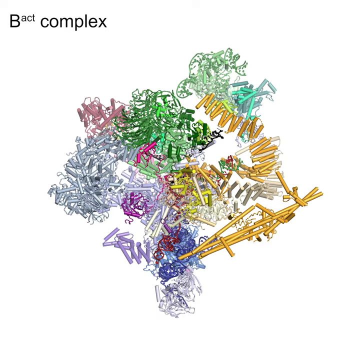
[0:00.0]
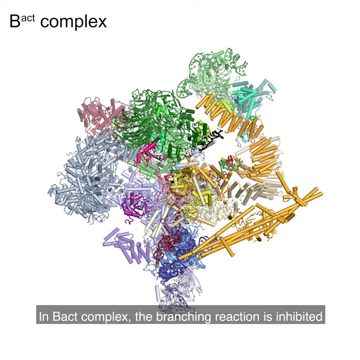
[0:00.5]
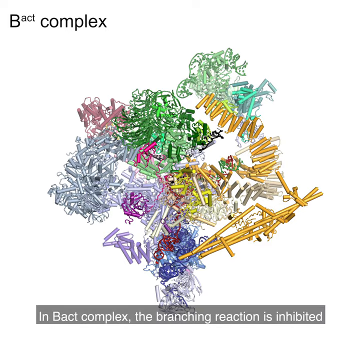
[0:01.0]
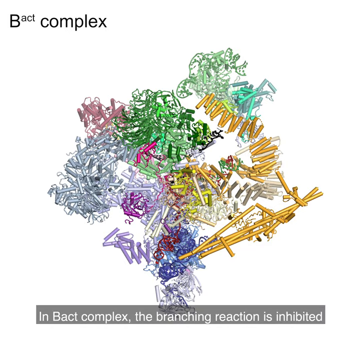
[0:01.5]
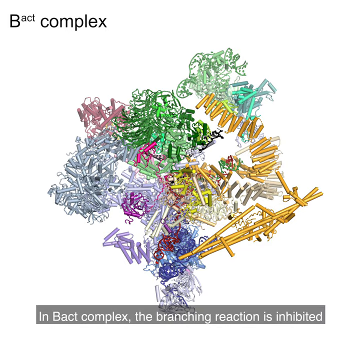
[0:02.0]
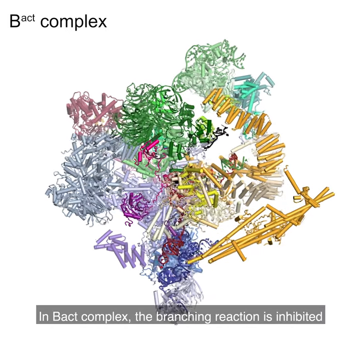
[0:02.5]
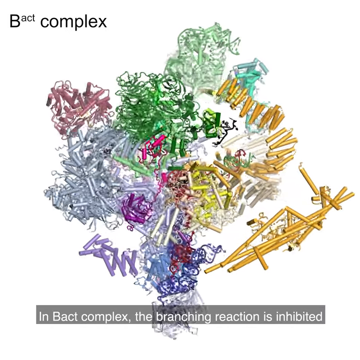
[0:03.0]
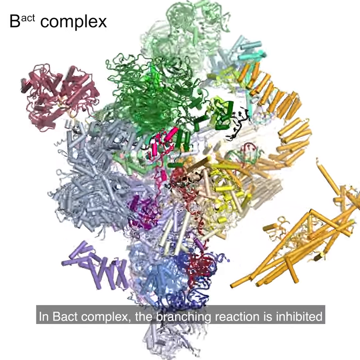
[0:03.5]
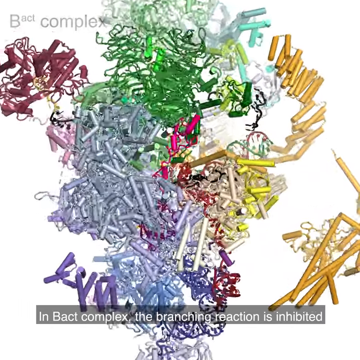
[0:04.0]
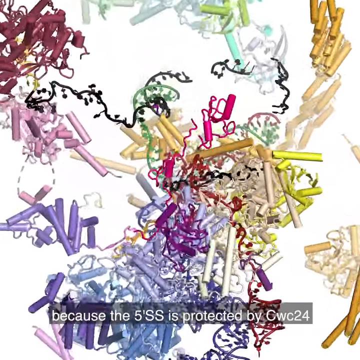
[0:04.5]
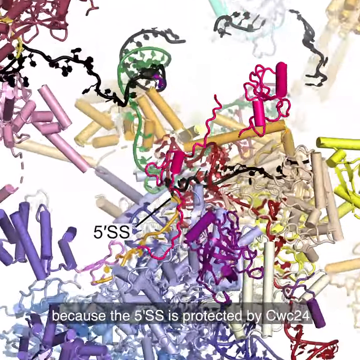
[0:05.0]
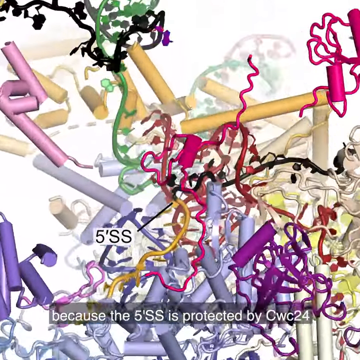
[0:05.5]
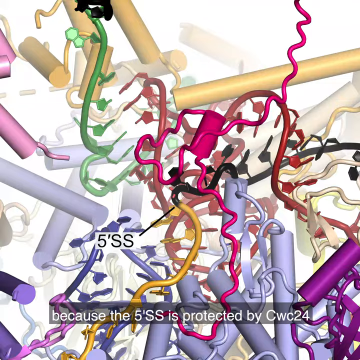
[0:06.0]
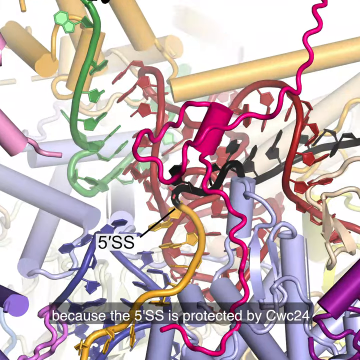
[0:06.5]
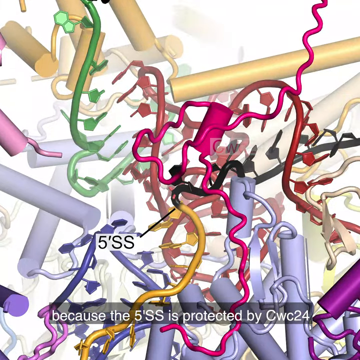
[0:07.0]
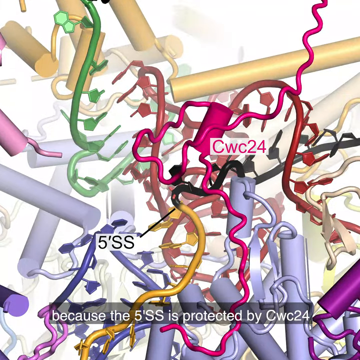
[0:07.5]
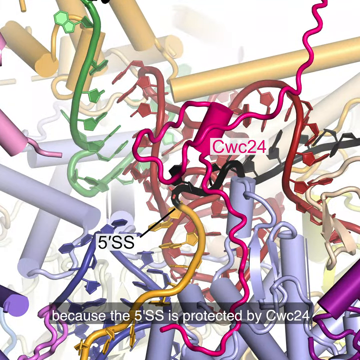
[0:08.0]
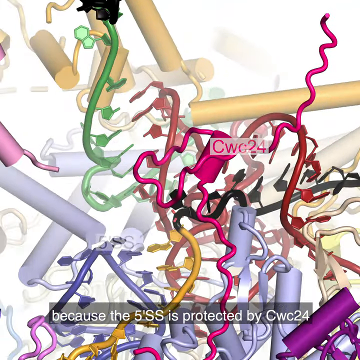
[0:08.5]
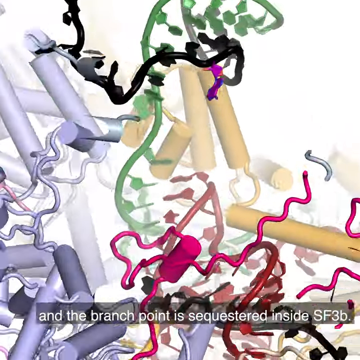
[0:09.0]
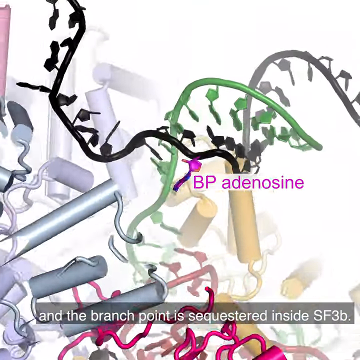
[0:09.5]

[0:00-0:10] A structure that looks like a complex illustration of an organic structure appears, with text descriptions written across the bottom of the screen. The structures take the form of short tubes in yellow, gold, red, brown, purple, green and pale green, and they have what seem to be tightly curled strings attached to them. The structures unravel as the camera zooms in to show their details, and one of the structures carries the label "BP adenosine".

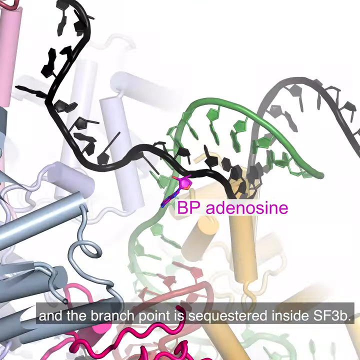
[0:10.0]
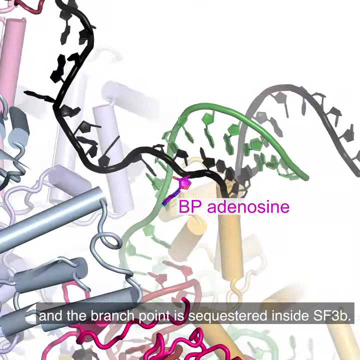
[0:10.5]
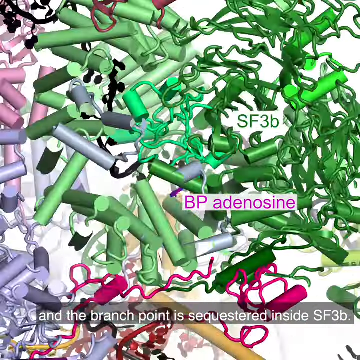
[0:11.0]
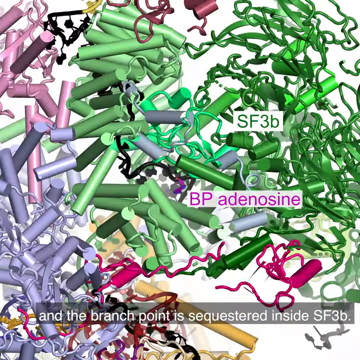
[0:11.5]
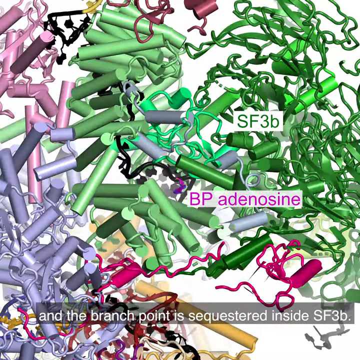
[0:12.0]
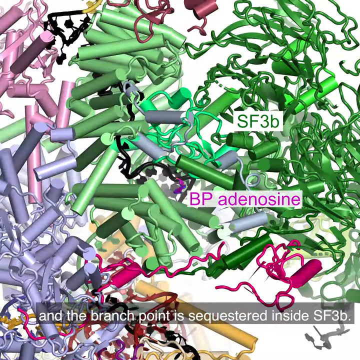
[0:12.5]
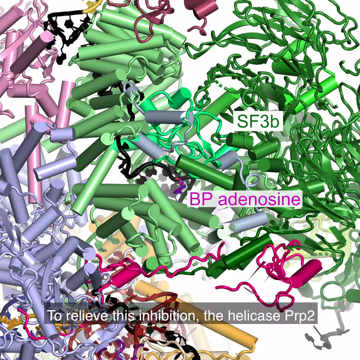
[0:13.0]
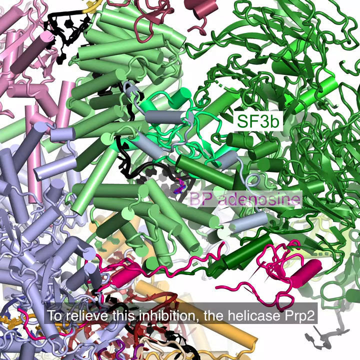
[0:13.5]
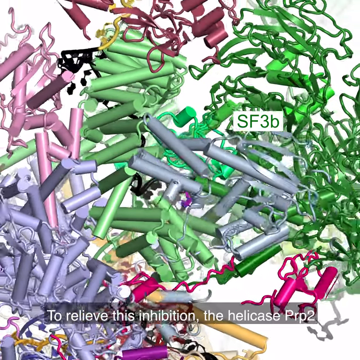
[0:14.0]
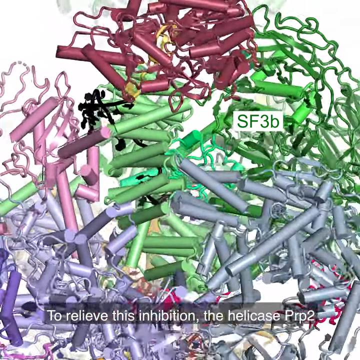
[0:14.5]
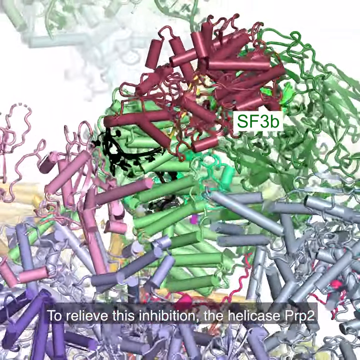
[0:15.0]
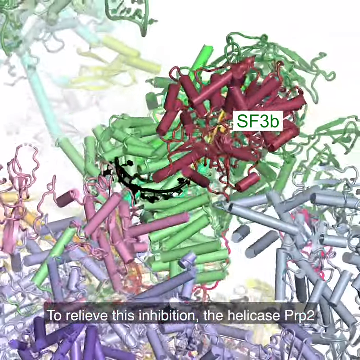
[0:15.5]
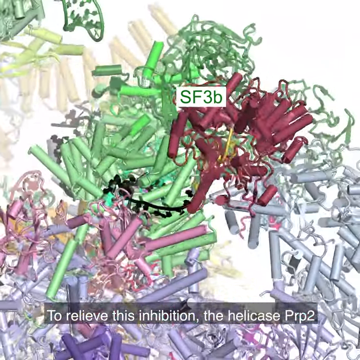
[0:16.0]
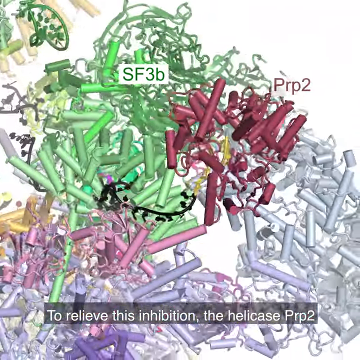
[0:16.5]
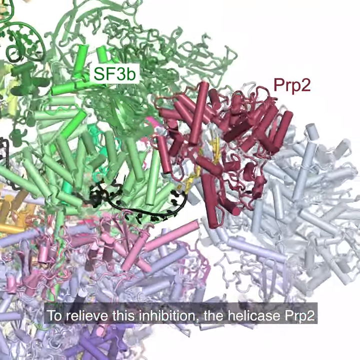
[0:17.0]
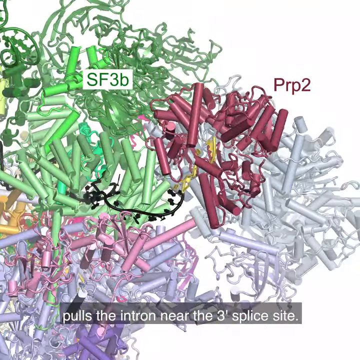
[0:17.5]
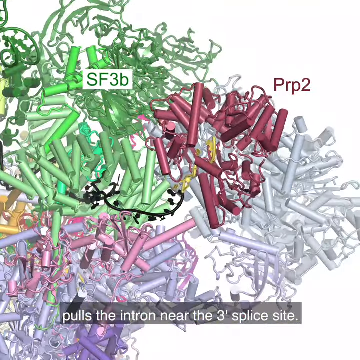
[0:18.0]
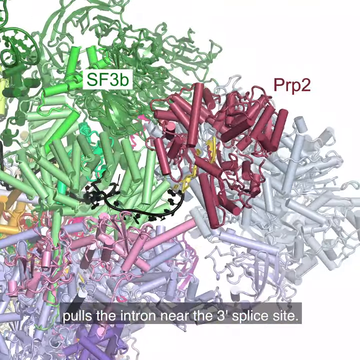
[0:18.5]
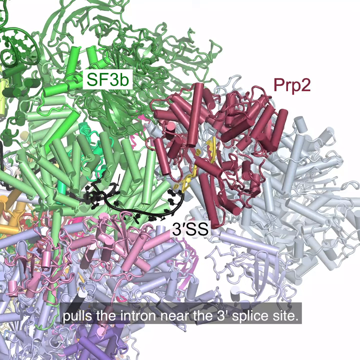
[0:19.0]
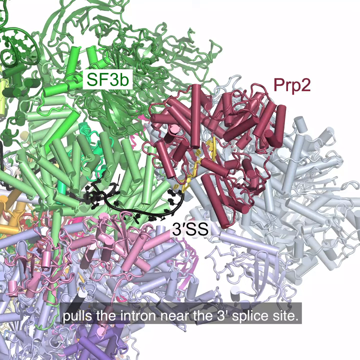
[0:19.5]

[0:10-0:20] An animated illustration shows a complex structure that looks like an organic or biological structure, with text descriptions written across the bottom of the screen. The structures are grey, green, black and red and look like unravelled DNA strands. A pink label reading "BP adenosine" is on the structures, and another label, in green text, reads "SF3B". The structures begin to swirl around, and another structure is labelled "BRP2" in a deep magenta colour. The text across the bottom of the screen includes the words "pulls the" and "splice site".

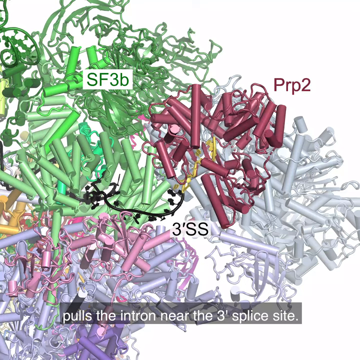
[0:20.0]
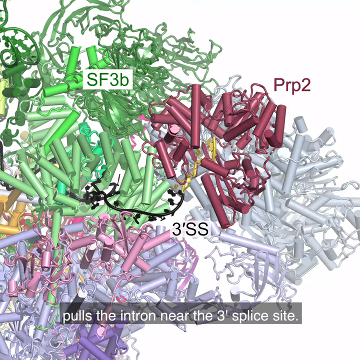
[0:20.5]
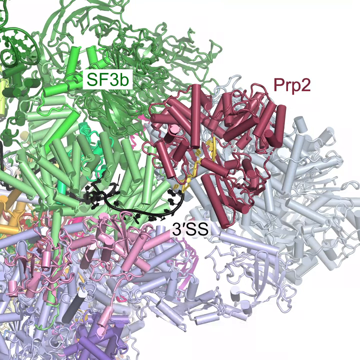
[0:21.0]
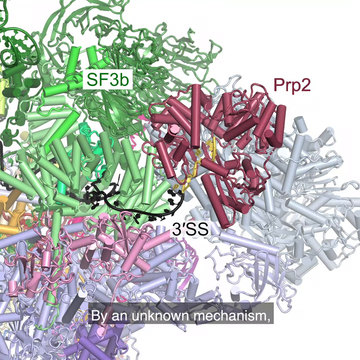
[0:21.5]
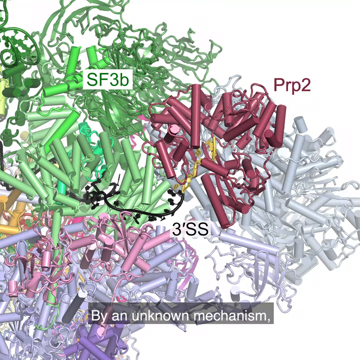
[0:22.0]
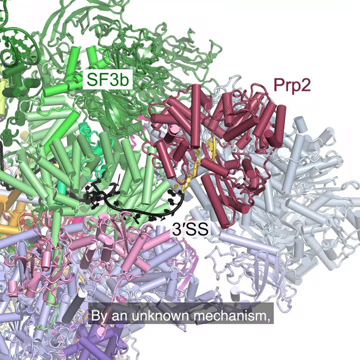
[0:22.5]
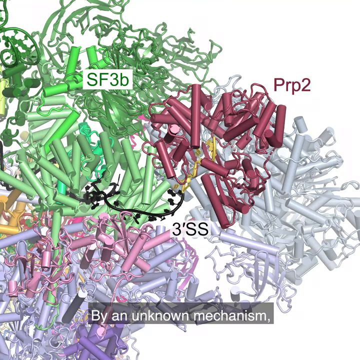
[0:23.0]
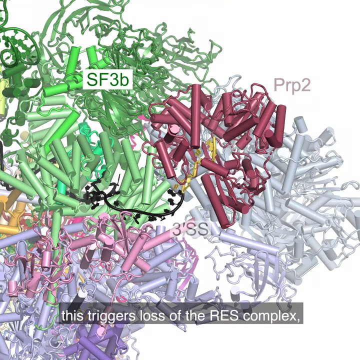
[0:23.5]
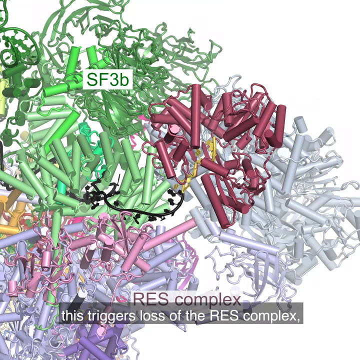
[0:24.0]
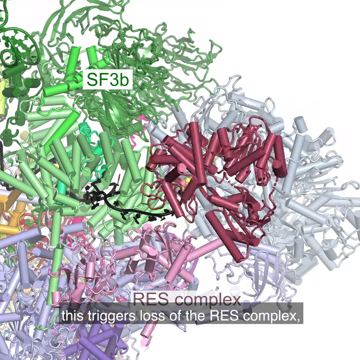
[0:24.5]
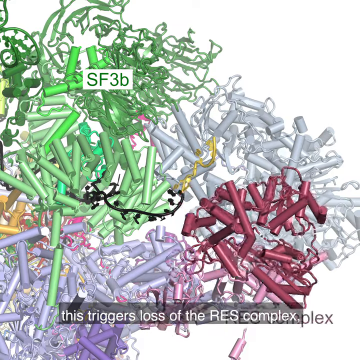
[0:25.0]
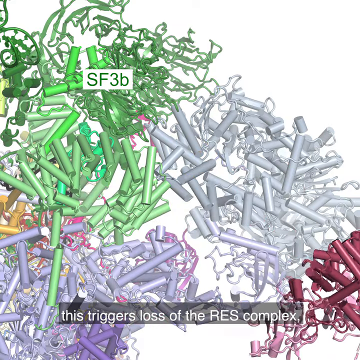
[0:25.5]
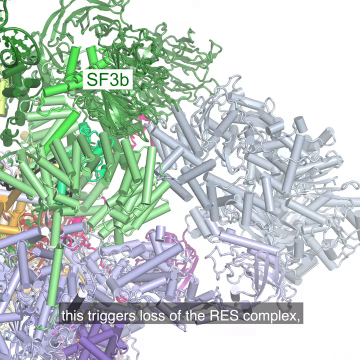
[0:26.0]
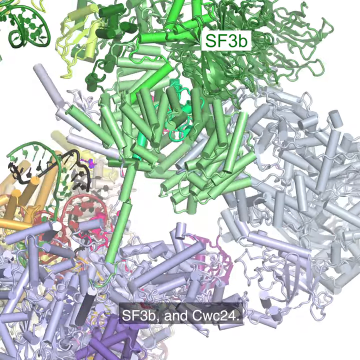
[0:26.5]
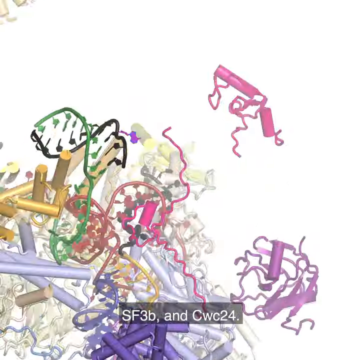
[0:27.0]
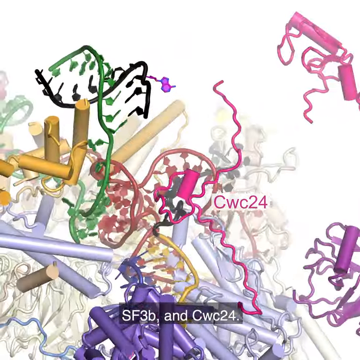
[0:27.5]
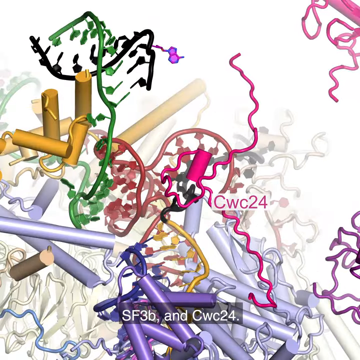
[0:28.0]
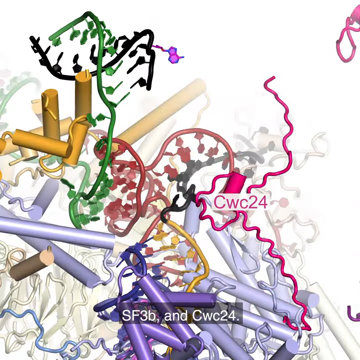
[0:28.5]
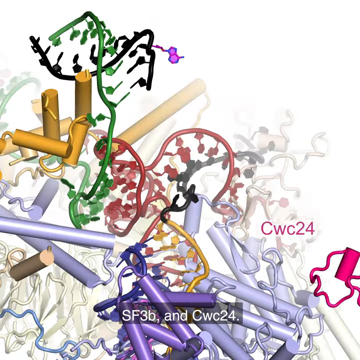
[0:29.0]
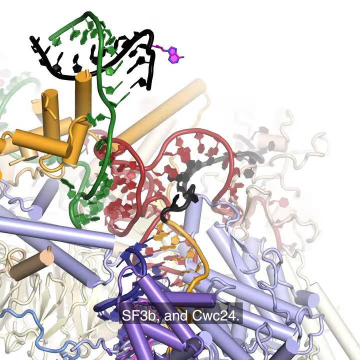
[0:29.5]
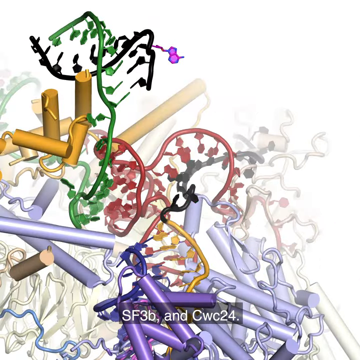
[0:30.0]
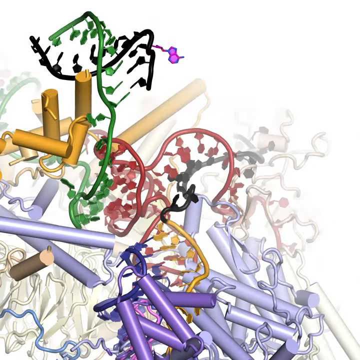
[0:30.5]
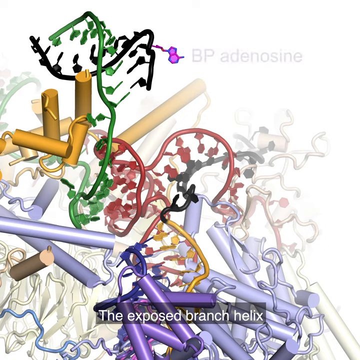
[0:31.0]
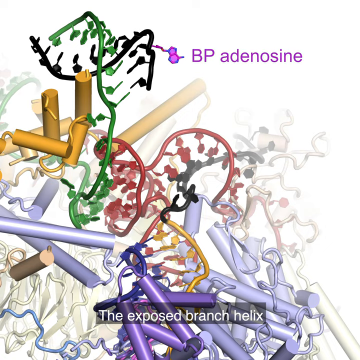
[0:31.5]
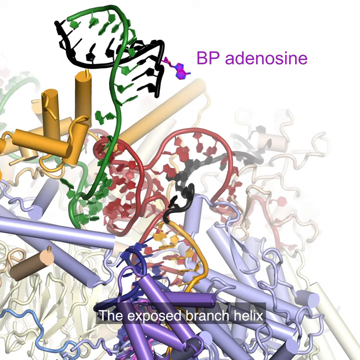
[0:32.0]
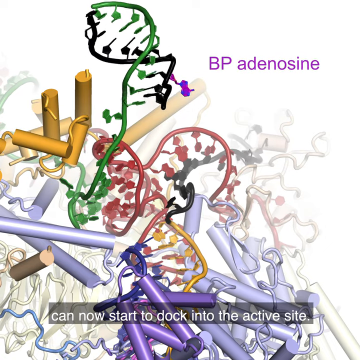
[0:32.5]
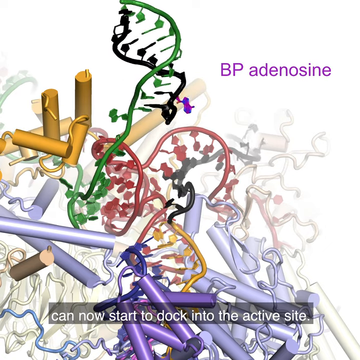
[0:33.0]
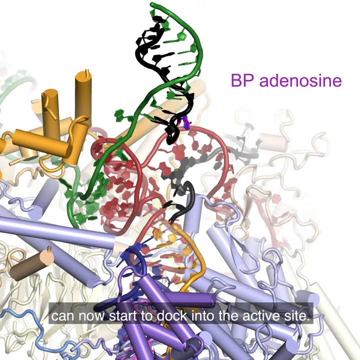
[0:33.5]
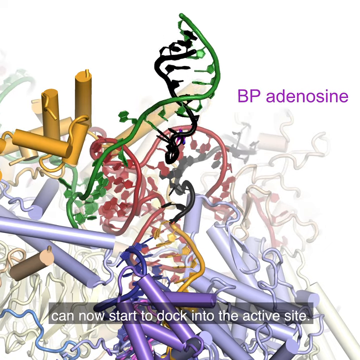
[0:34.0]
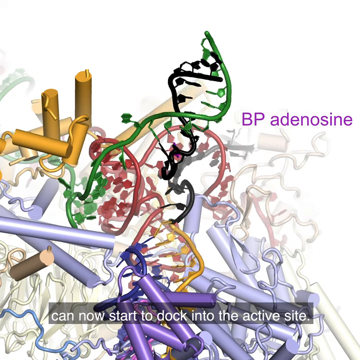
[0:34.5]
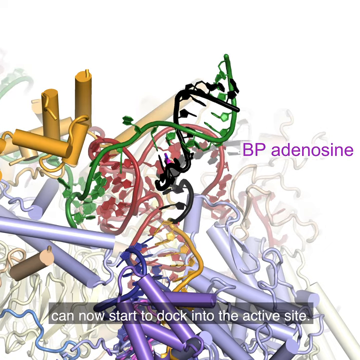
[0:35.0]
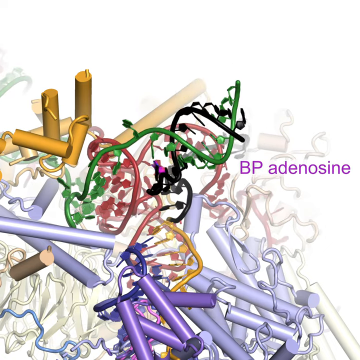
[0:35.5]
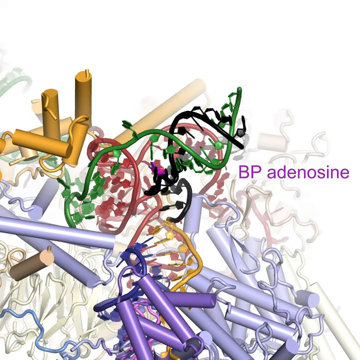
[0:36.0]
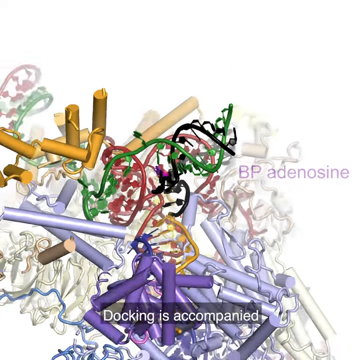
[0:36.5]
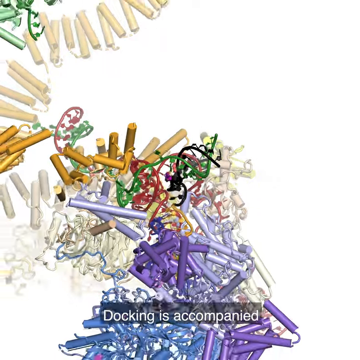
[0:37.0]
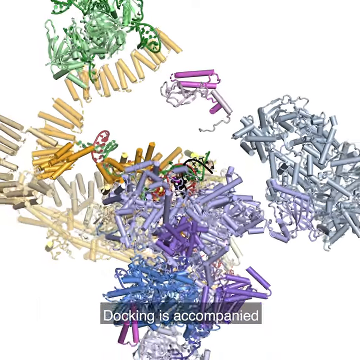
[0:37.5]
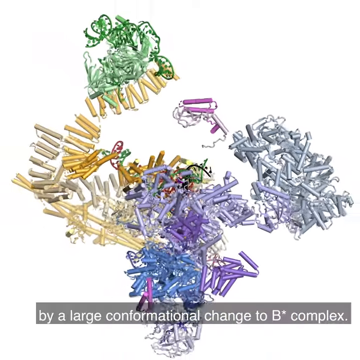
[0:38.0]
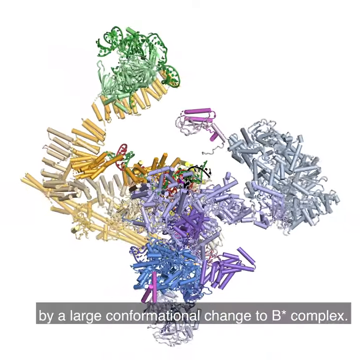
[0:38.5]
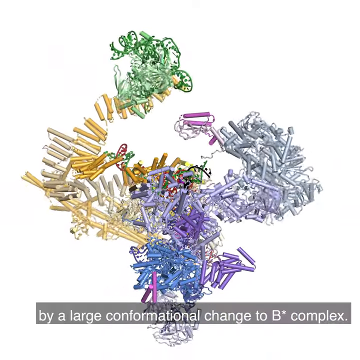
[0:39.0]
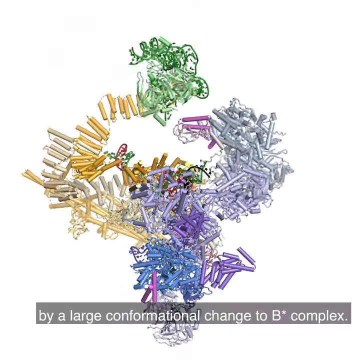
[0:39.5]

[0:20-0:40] An animated illustration shows a chemical structure that looks like an organic biological structure, with white text descriptions across the bottom of the screen. The structures are grey, green, black and red; they look tangled together and resemble small cylindrical tubes with curly strands all around them. The white text at the bottom reads "By an unknown mechanism. This triggers loss of the RES complex." Two parts of the RES complex float away at the lower right corner of the illustration. The RES complex disappears and the structure unravels, with more of the strands disappearing. The labels "SF3B" and "CWC24" also disappear from the structure, and the structure labelled "BP adenosine" begins to collapse as the entire structure unravels.